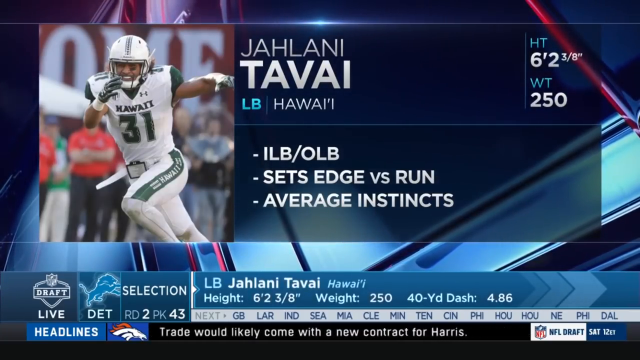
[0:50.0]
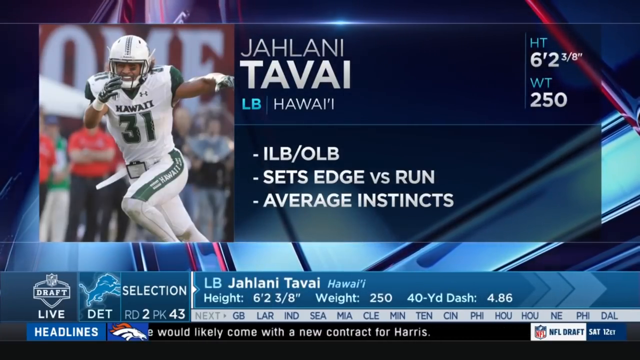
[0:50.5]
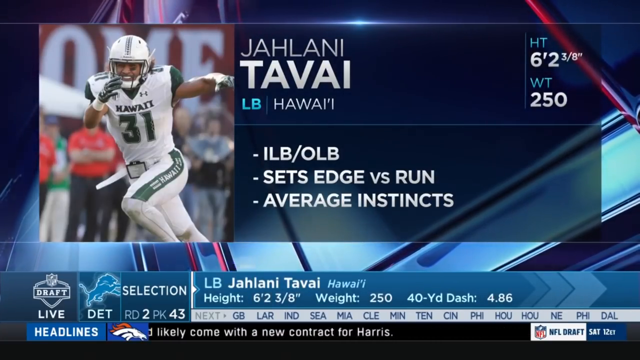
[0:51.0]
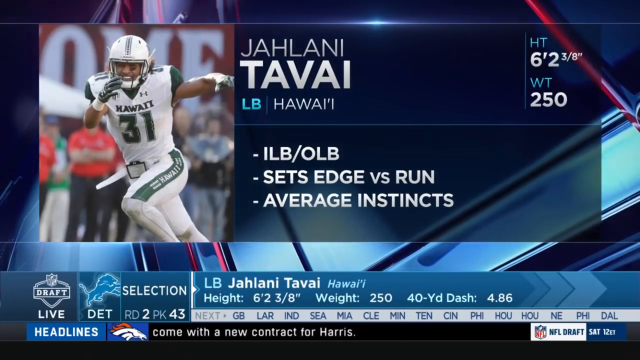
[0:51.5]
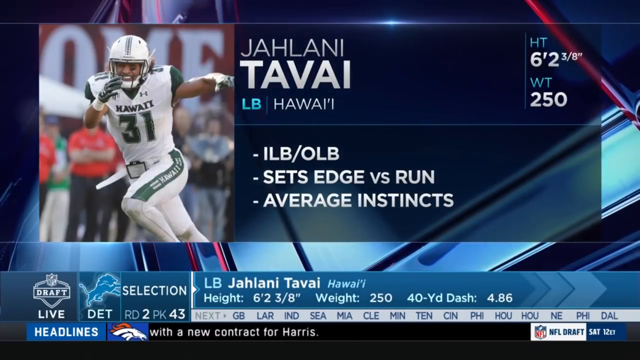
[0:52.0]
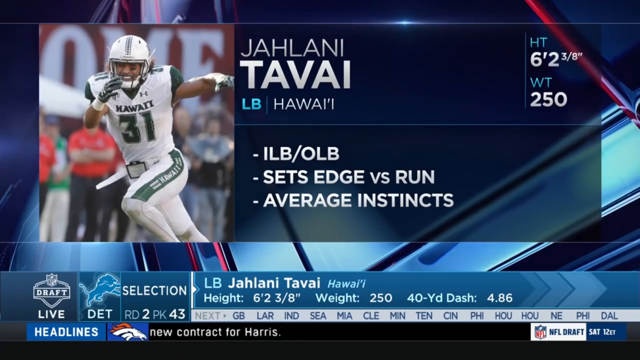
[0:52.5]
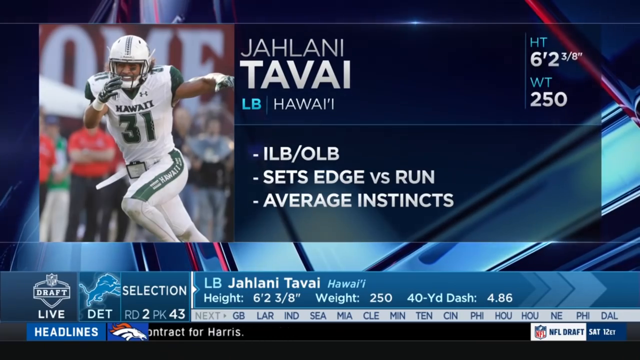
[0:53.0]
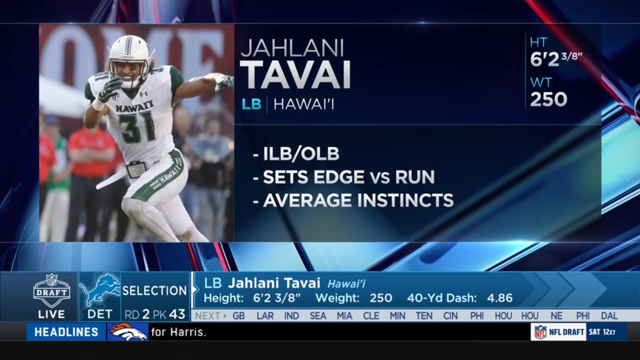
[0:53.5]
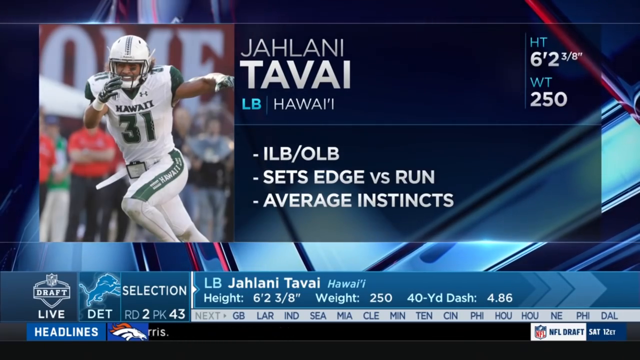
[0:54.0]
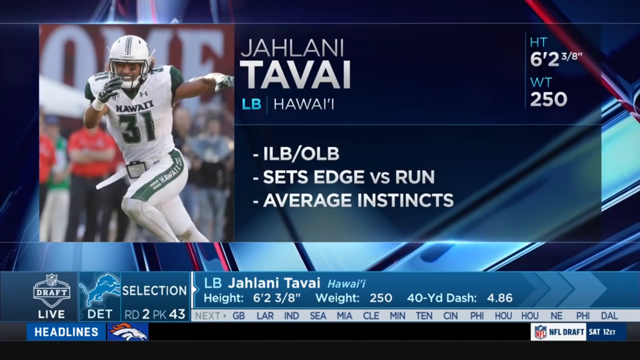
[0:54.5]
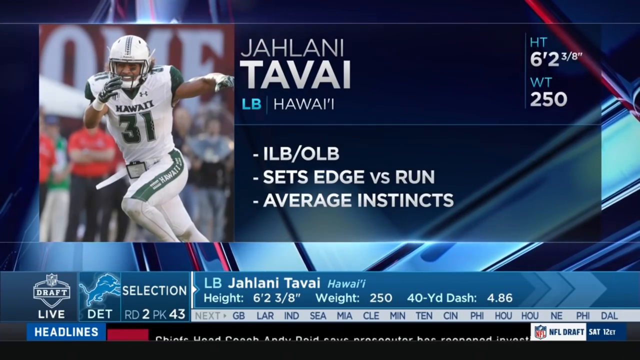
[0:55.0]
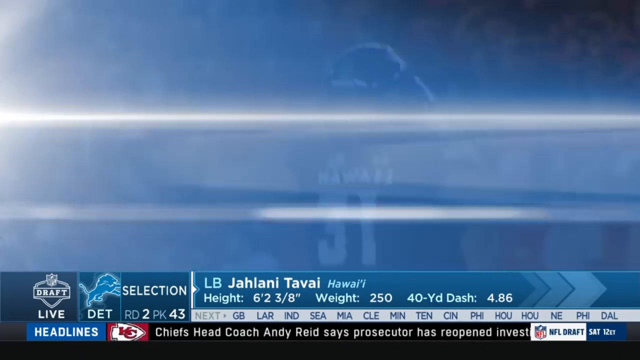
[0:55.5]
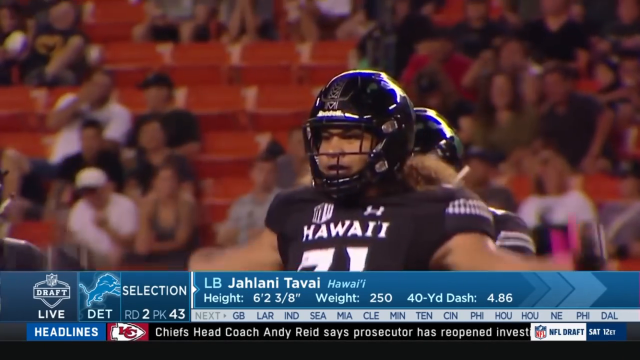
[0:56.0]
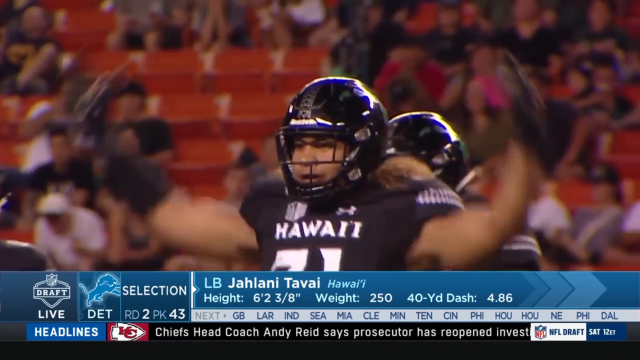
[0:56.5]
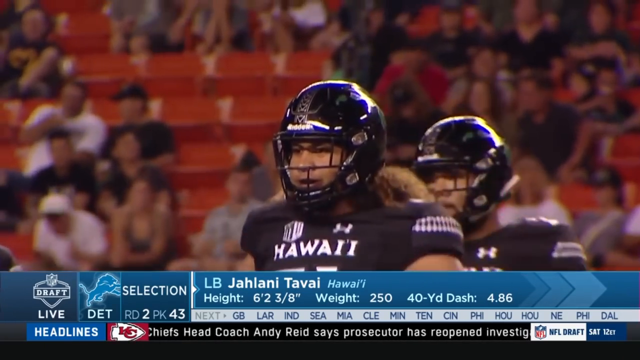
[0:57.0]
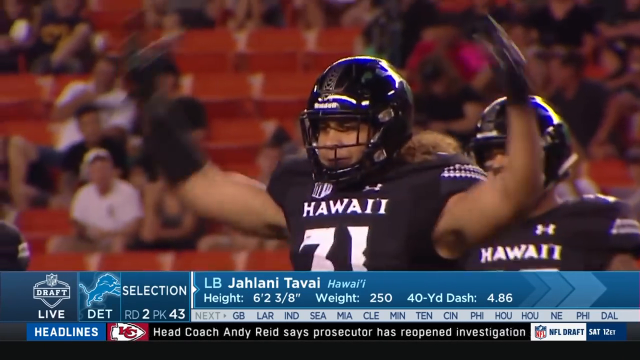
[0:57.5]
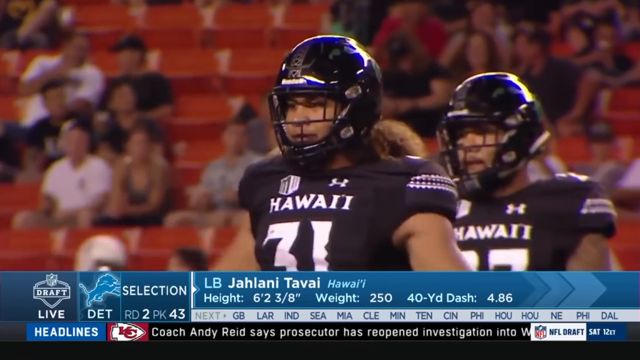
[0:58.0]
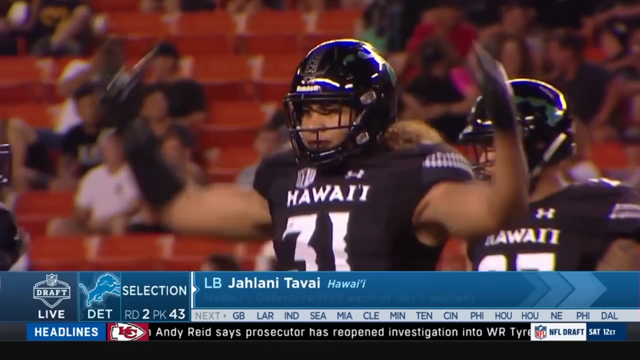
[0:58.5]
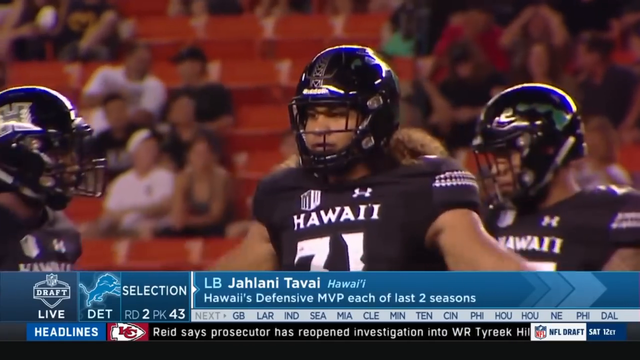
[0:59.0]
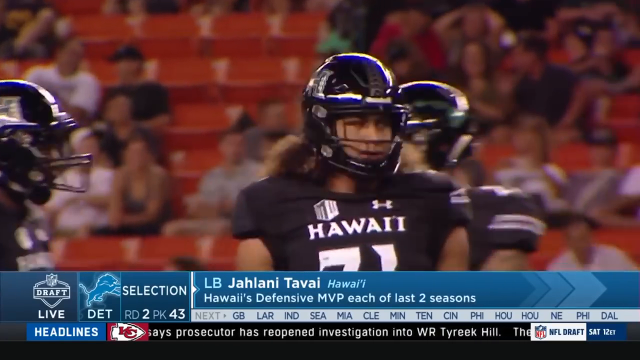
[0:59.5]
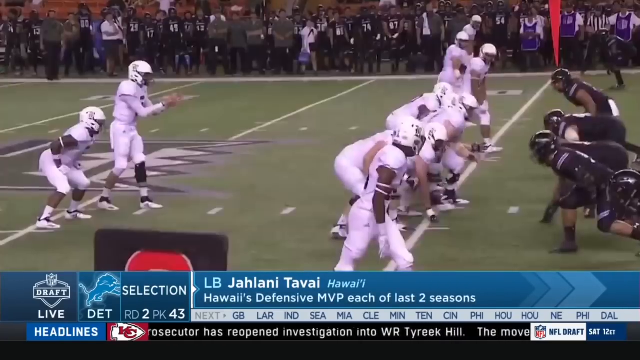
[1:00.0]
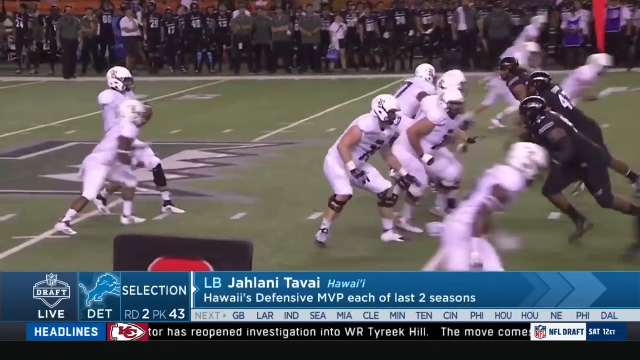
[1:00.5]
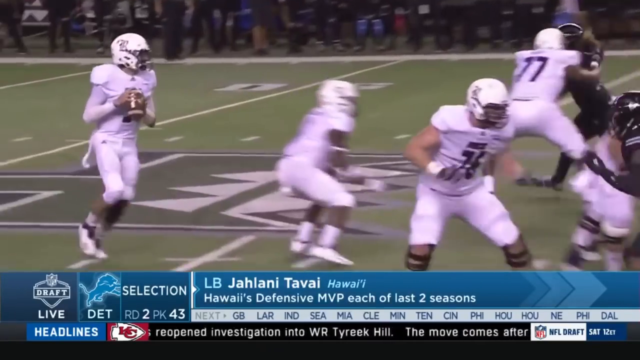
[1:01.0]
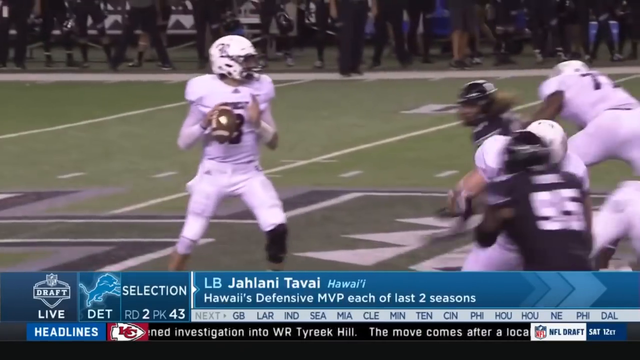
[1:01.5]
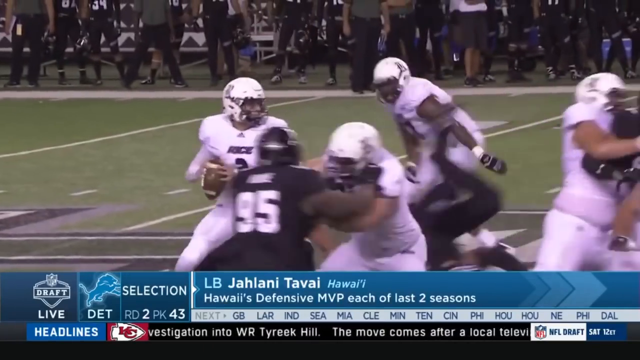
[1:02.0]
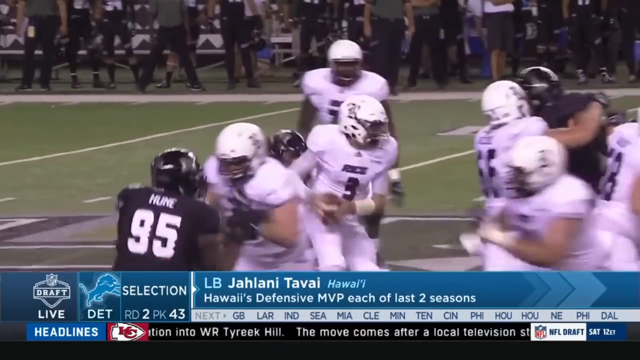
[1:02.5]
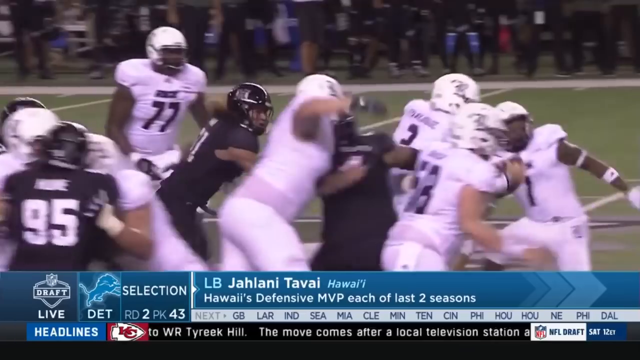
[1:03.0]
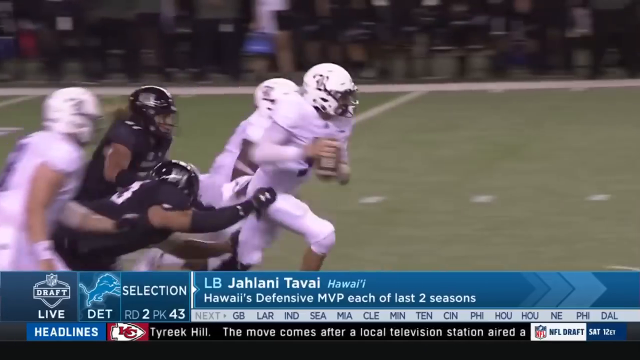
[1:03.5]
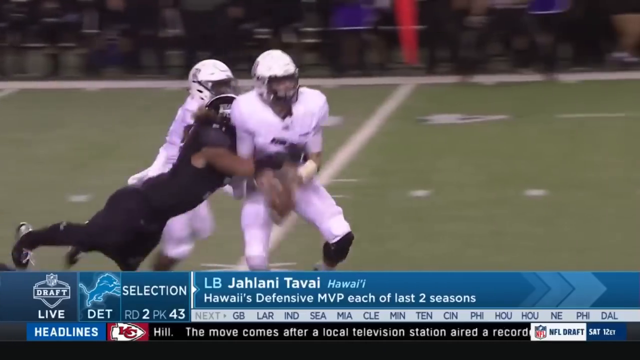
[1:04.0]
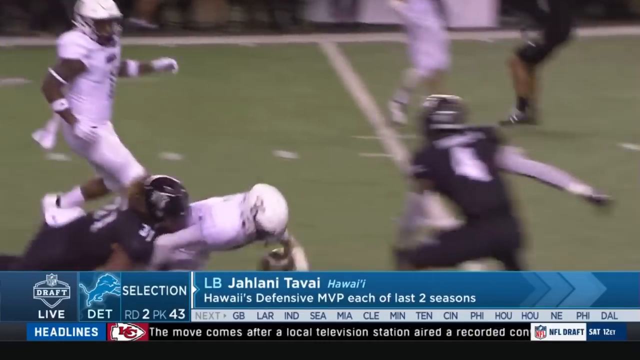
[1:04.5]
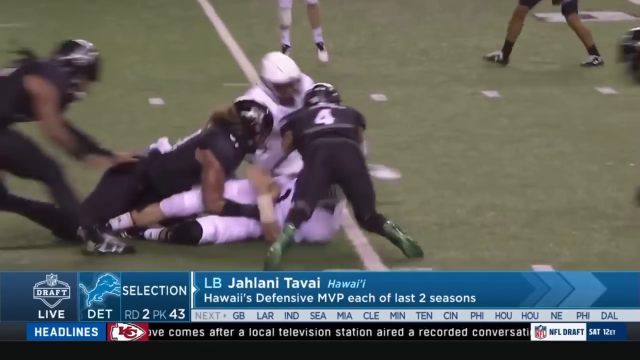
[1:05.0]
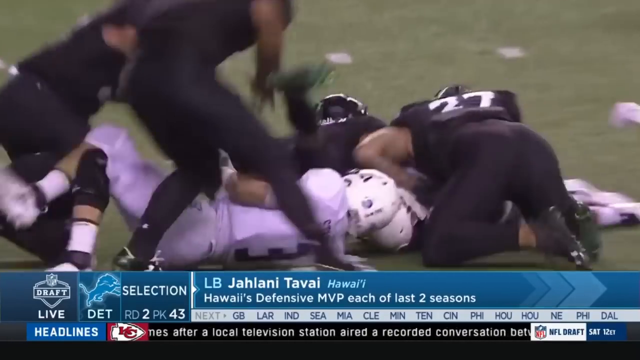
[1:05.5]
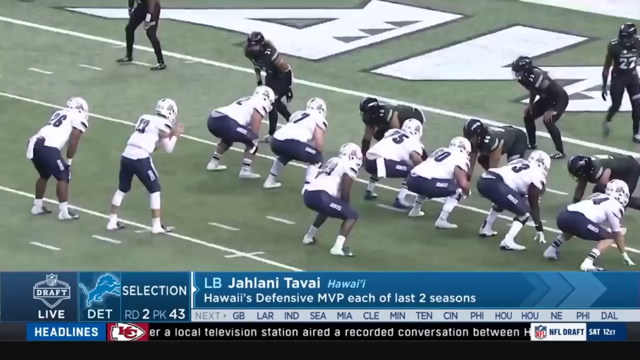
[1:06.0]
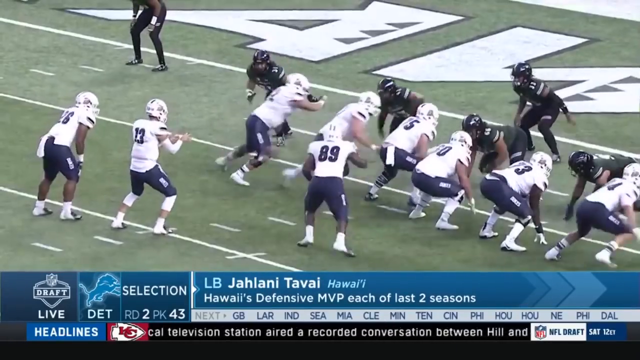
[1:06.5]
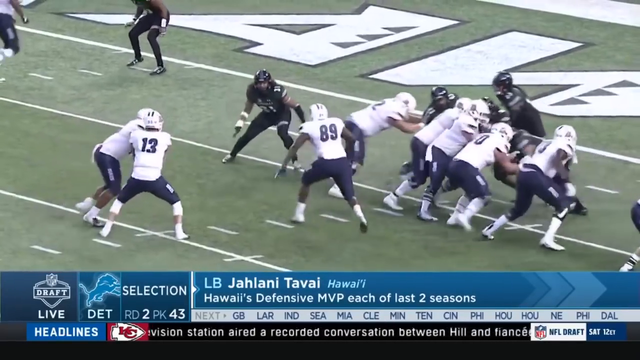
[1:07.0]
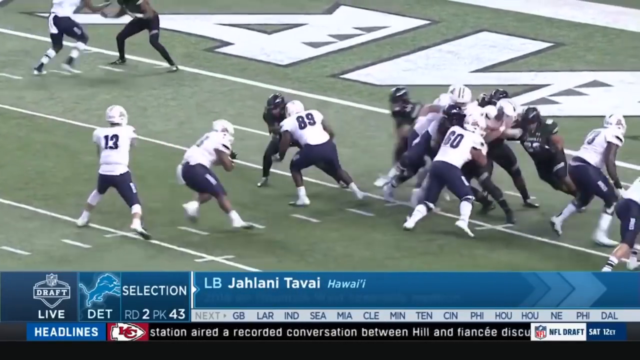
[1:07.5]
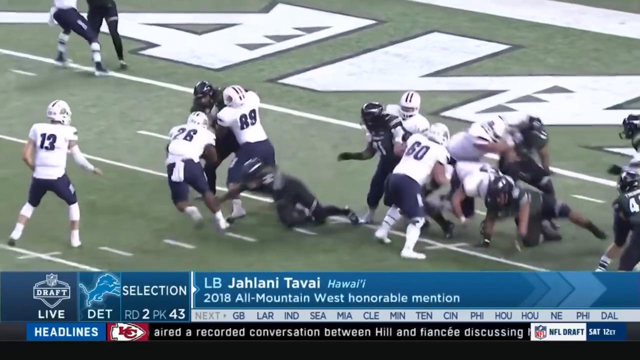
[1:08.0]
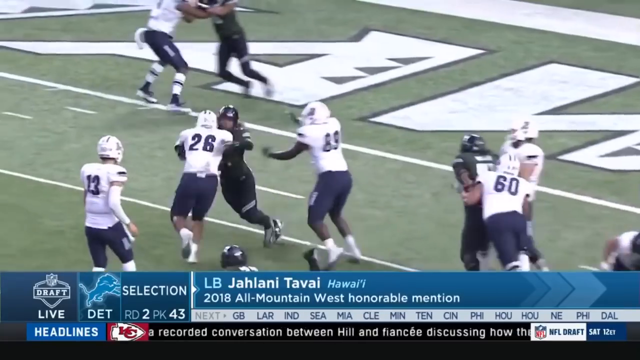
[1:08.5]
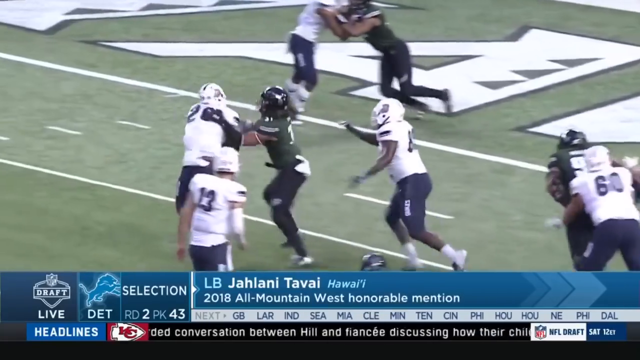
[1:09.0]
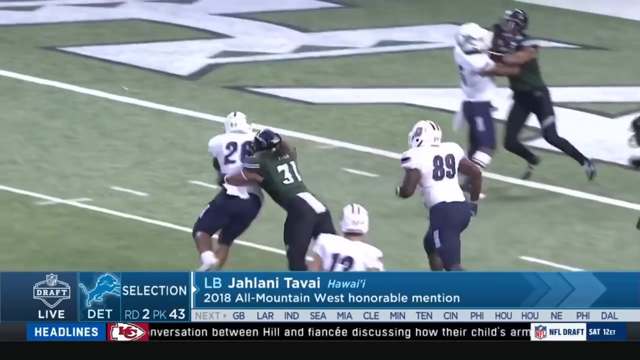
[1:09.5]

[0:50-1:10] The graphic of Jelani Tovai remains, with him on the left and the text on the right. It then changes to a player in a black uniform and black helmet on the pitch. Another player behind him, wearing the same uniform and with long hair, is kind of doing overhead claps to the crowd, and there is another player to his left. It cuts to a line of scrimmage and the snap, with a team in white on the left and a team in black on the right. The quarterback gets the ball, the line of scrimmage kind of breaks down, and he looks before making a dart through the line, then is tackled by a black player. It cuts to another shot, kind of from back and up, with a white team in blue trousers on the back left and the black team away from them, very close to the touchdown line. The quarterback gets the ball and palms it off to a runner, who runs into a player and is brought down before the touchdown line.